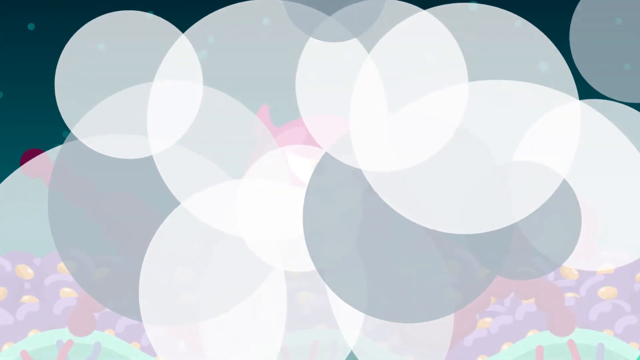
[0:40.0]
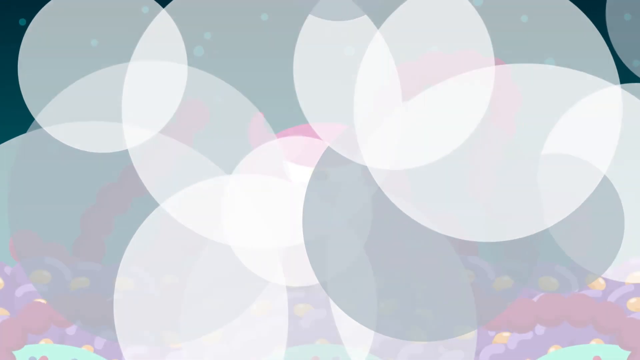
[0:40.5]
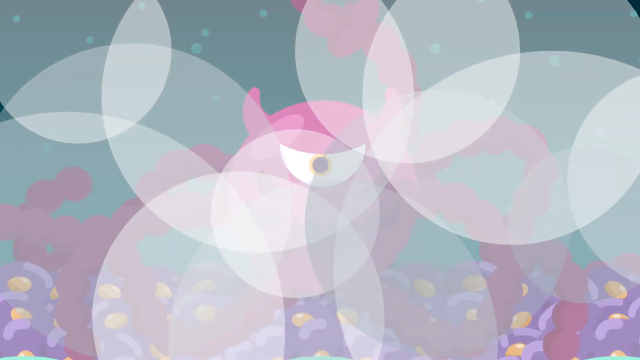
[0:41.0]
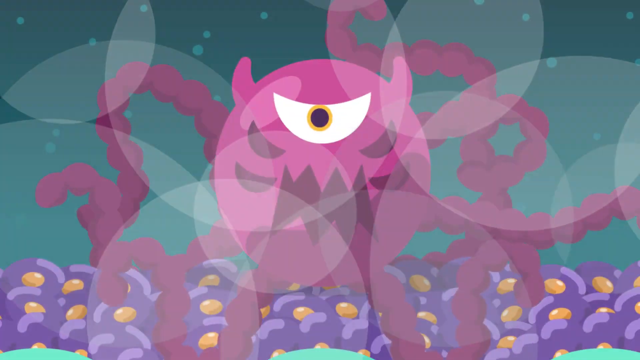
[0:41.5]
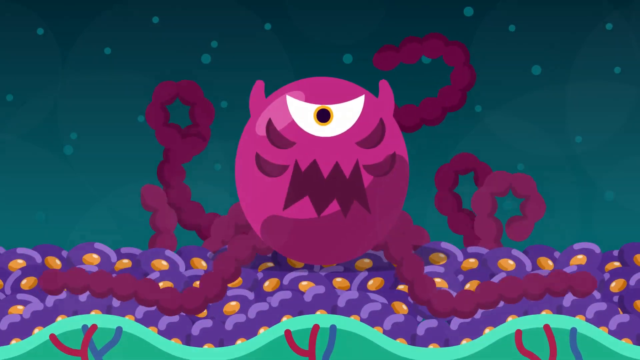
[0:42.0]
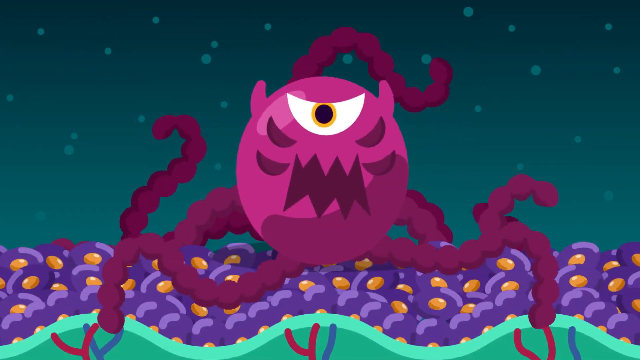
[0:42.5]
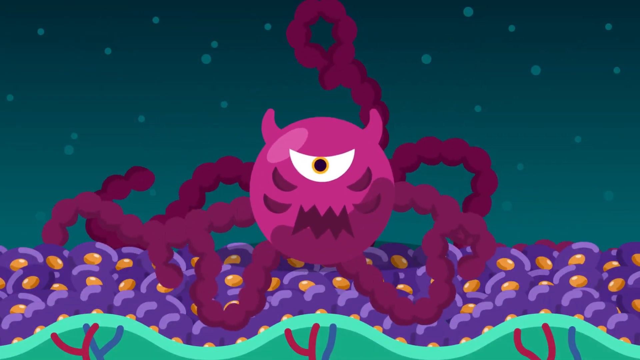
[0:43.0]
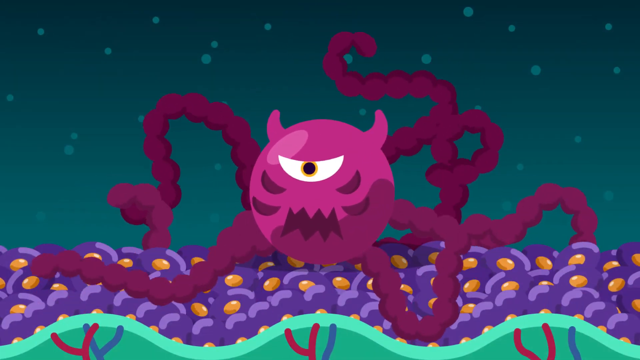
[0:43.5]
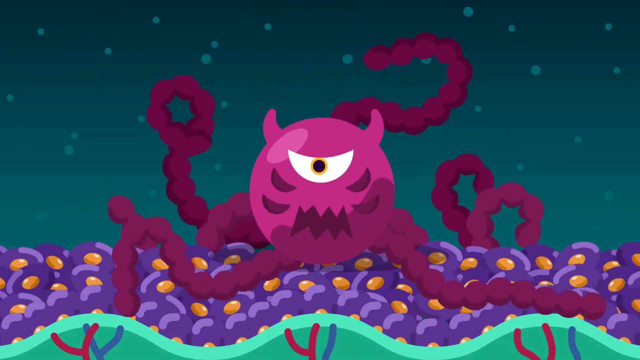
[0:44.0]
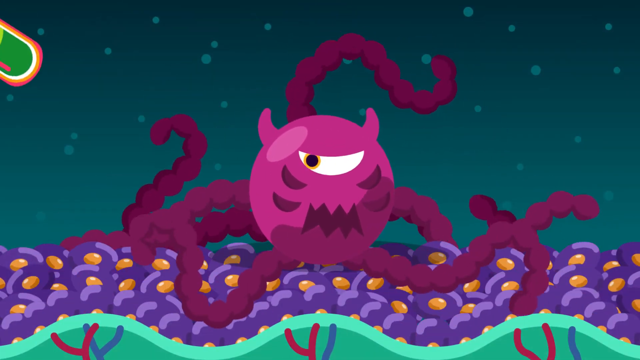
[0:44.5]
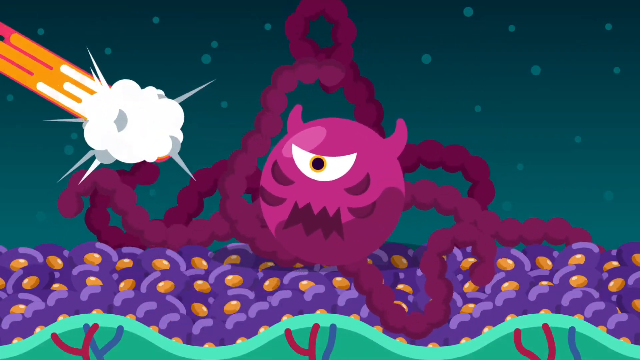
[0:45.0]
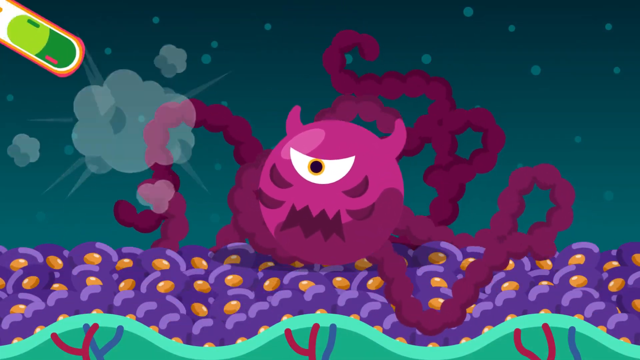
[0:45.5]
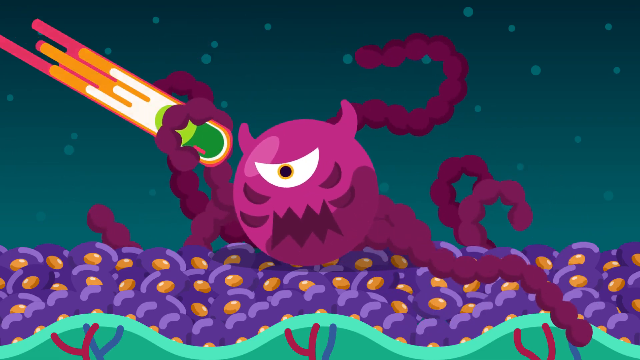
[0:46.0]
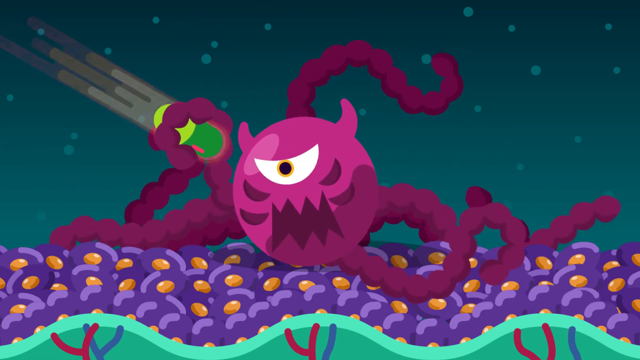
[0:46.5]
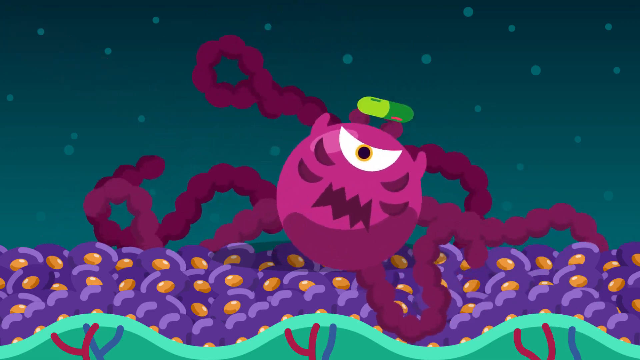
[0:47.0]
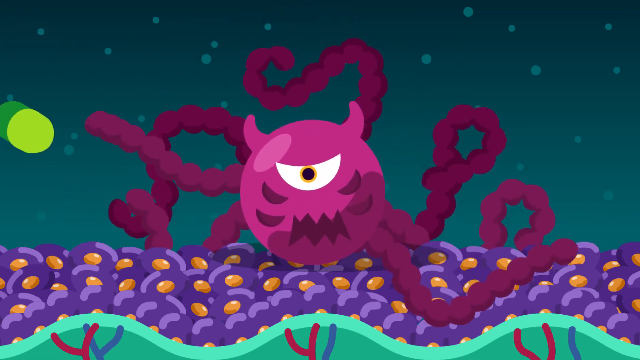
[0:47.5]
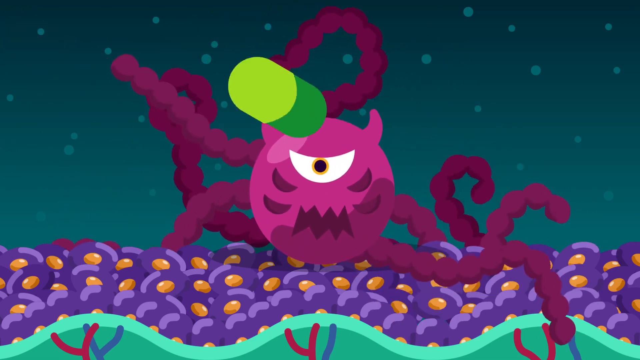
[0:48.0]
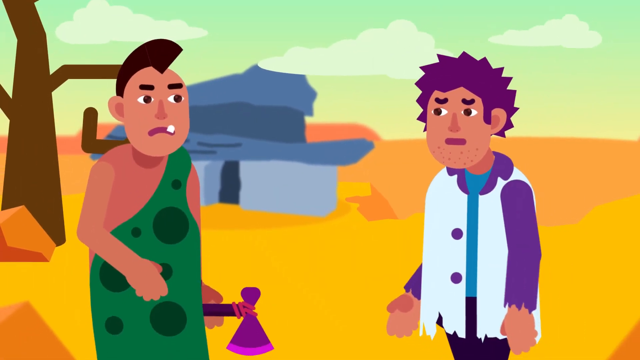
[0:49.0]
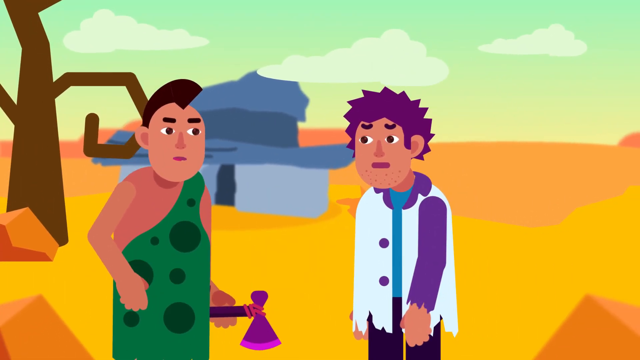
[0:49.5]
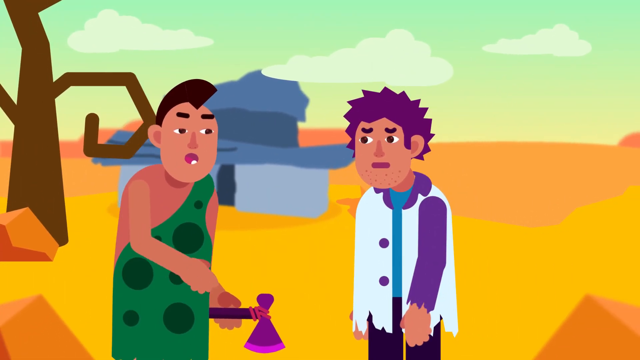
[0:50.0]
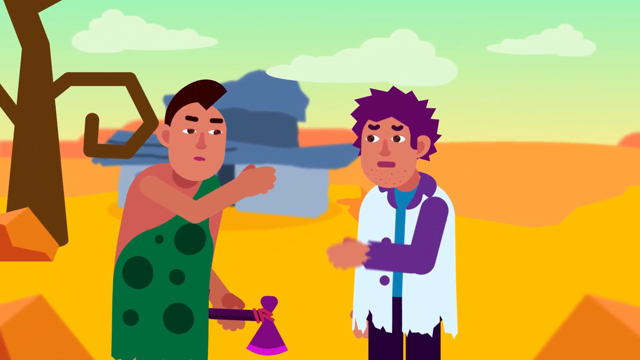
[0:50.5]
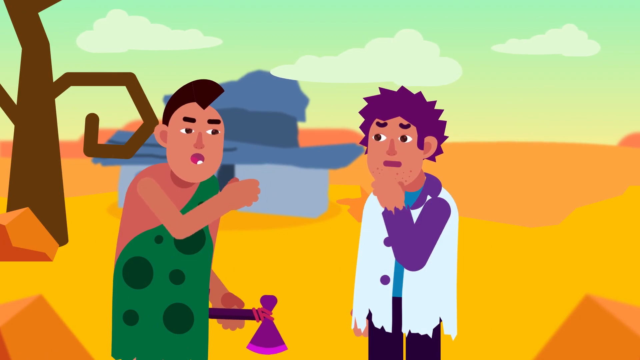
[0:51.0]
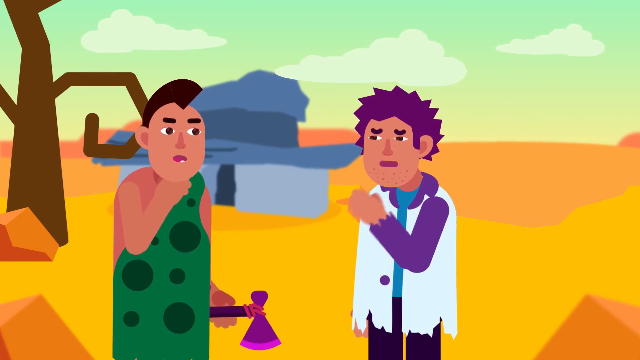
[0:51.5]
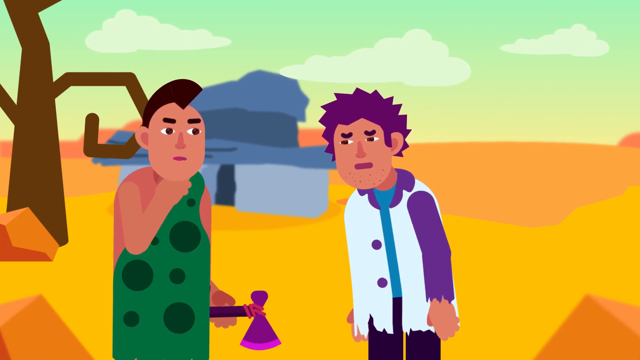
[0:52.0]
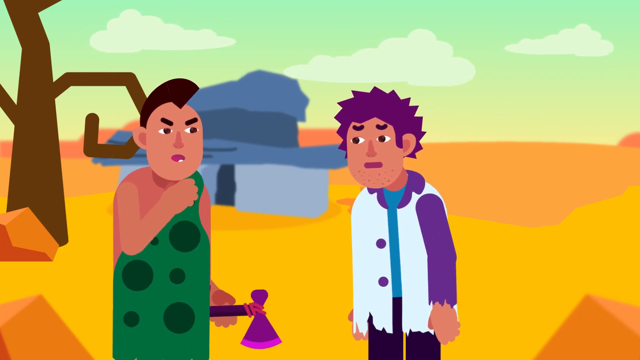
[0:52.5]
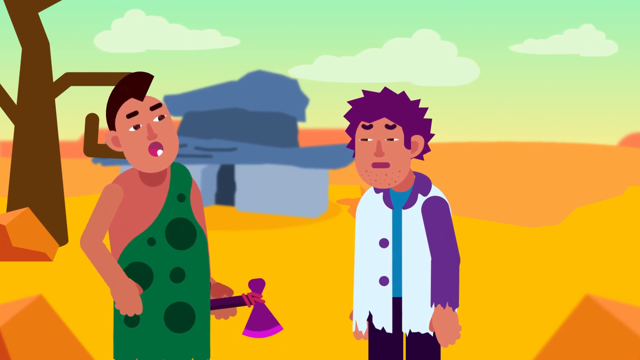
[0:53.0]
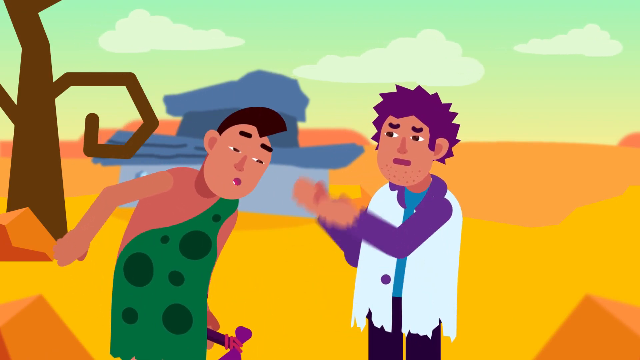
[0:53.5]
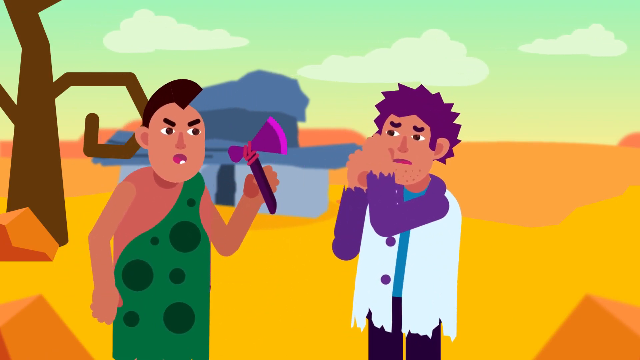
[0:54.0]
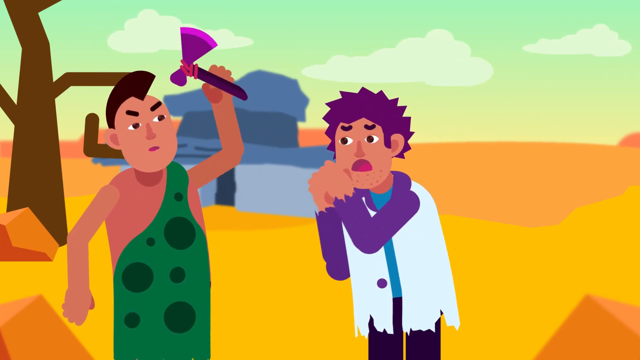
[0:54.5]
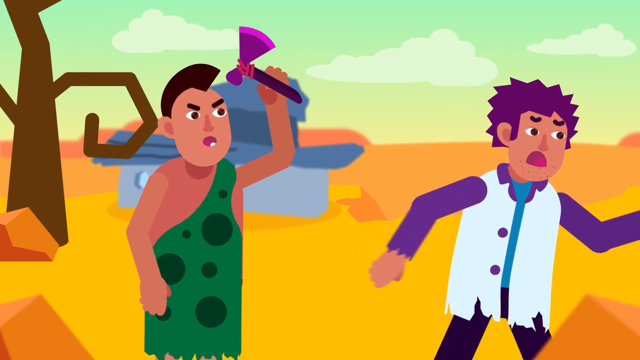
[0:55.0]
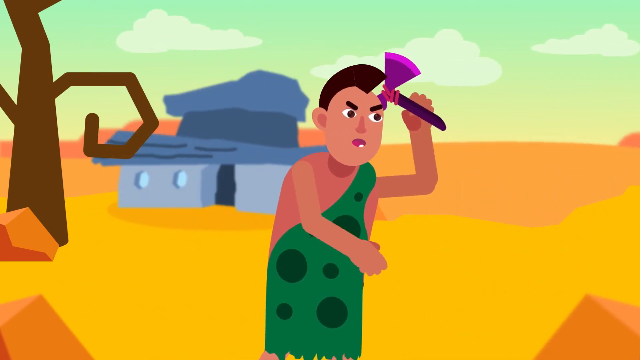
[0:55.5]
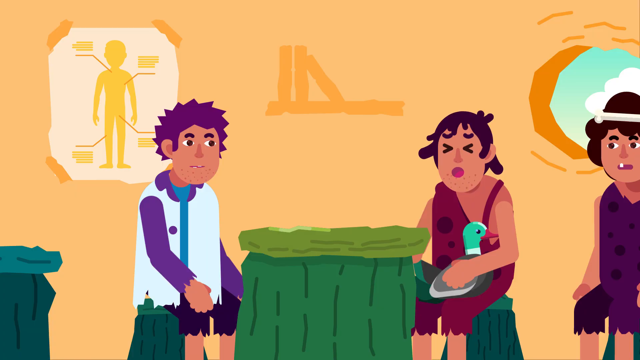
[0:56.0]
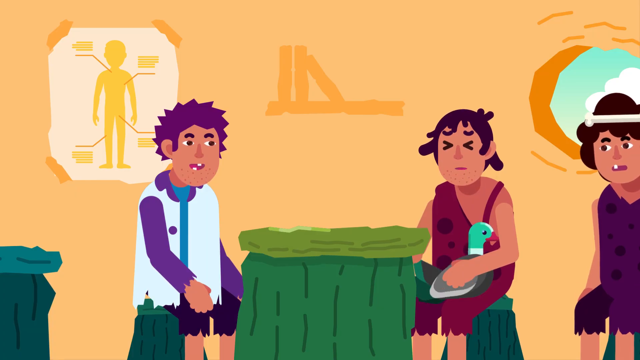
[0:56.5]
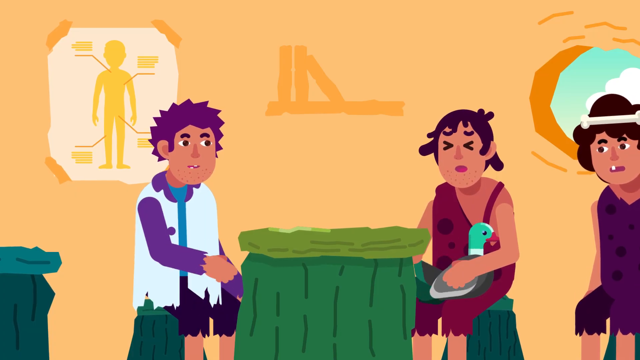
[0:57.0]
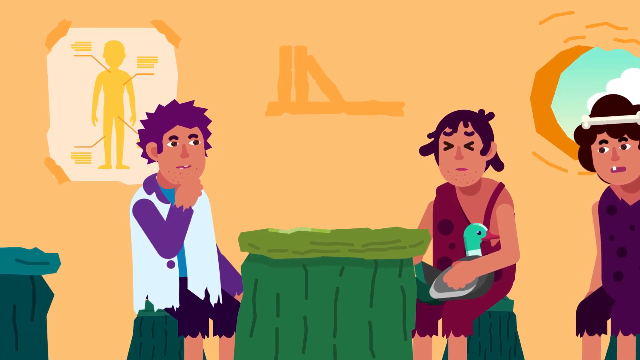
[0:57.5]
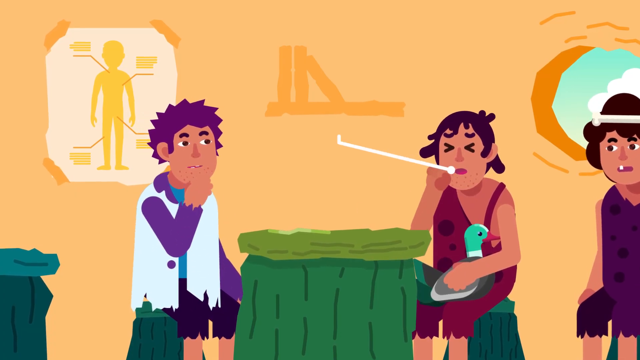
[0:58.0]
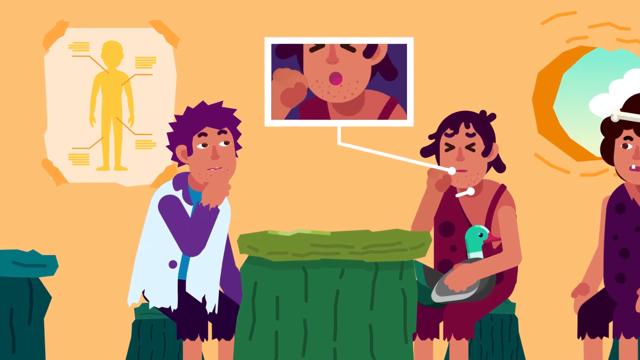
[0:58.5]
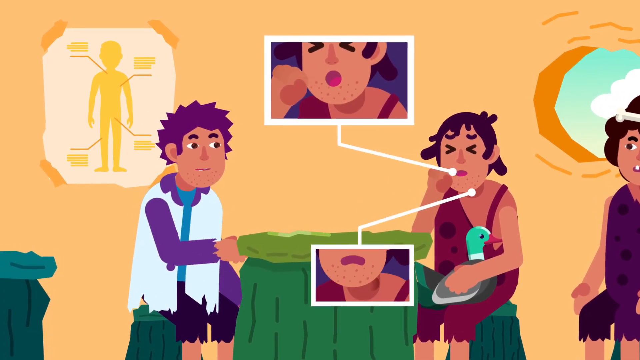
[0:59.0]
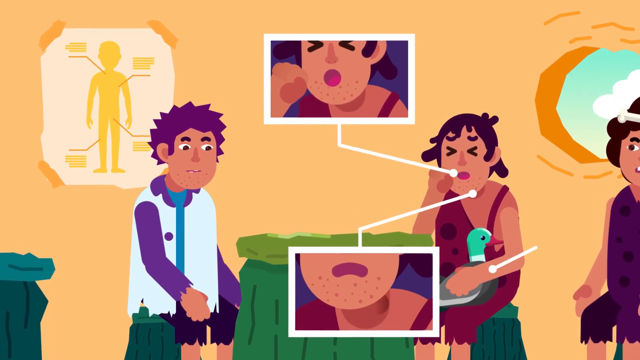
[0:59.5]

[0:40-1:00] The large virus monster, with tentacles, one eye and two small horns on top of its head, looks very angry and thrashes around. It seems to look in either direction before more attacks come. The attacks are shown as green pills attacking the monster through orange and pink streaks of light, and the monster throws a green pill back at the camera. The video then shows two people who look to be portrayed as cavemen outside; after a brief conversation, one takes an axe and chases the other man. The video returns to the three people in the waiting room with the person holding the duck. Two or three lines come off the coughing patient, appearing to display different symptoms such as coughing, redness and a rash.